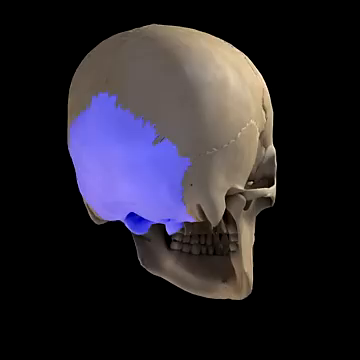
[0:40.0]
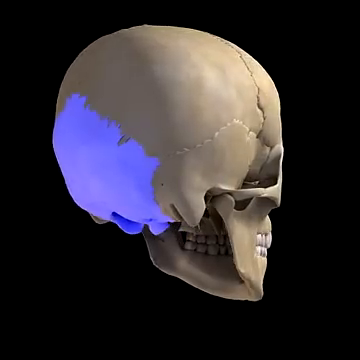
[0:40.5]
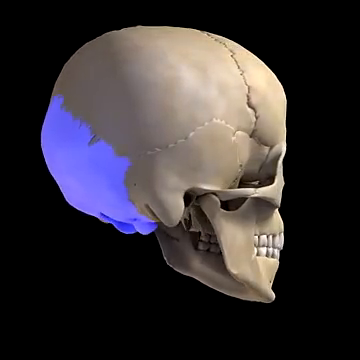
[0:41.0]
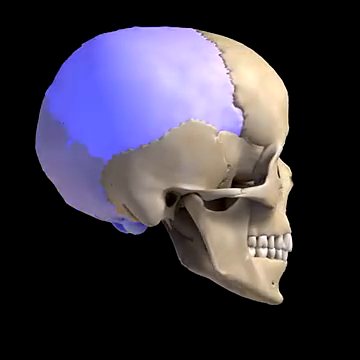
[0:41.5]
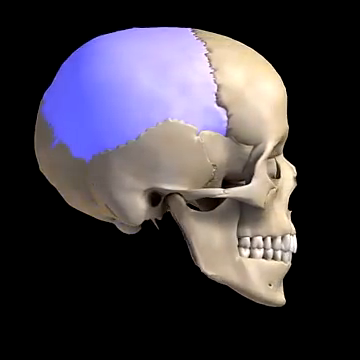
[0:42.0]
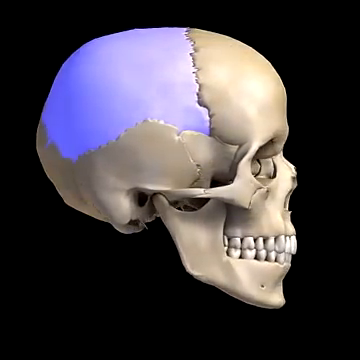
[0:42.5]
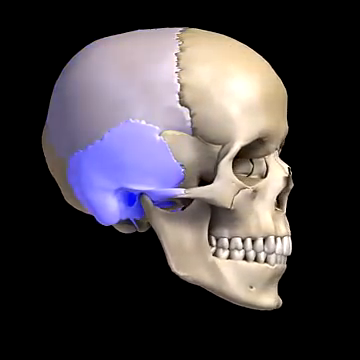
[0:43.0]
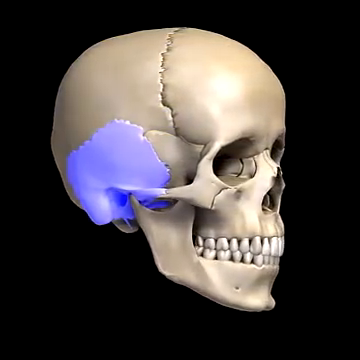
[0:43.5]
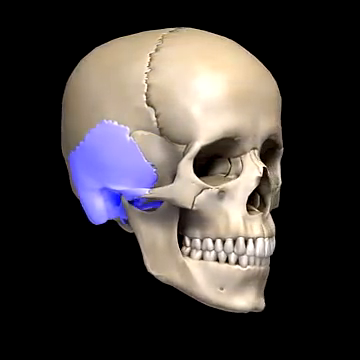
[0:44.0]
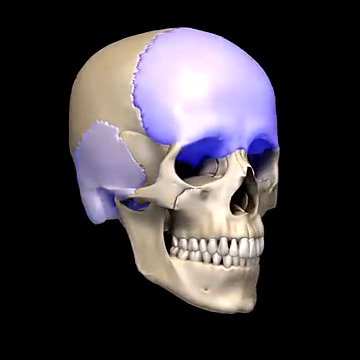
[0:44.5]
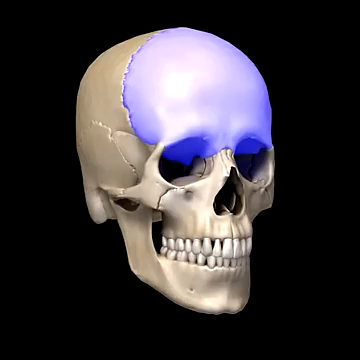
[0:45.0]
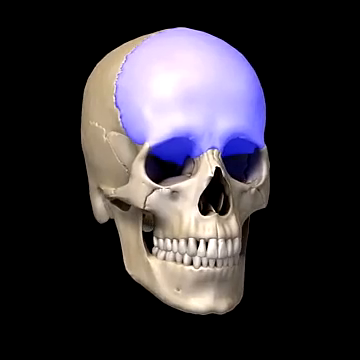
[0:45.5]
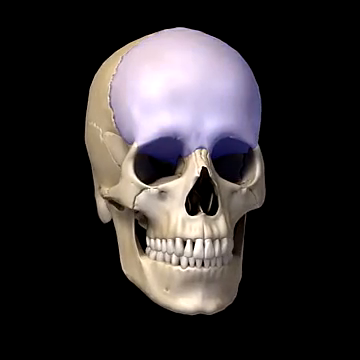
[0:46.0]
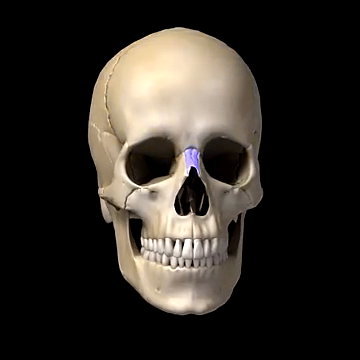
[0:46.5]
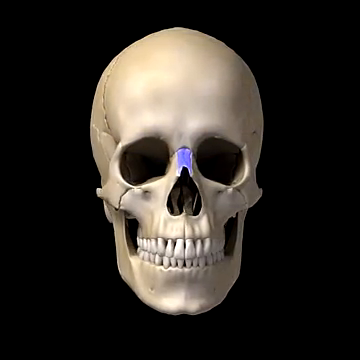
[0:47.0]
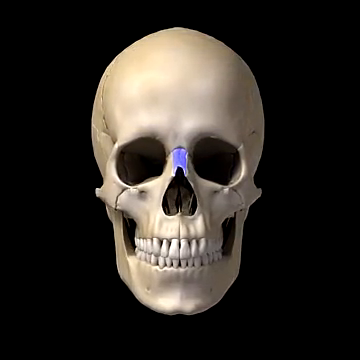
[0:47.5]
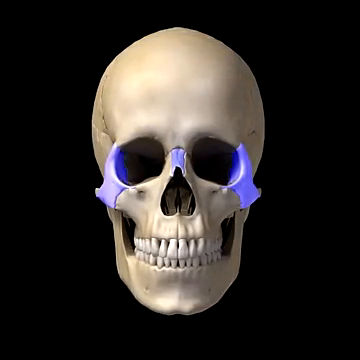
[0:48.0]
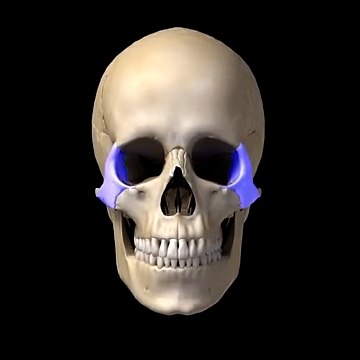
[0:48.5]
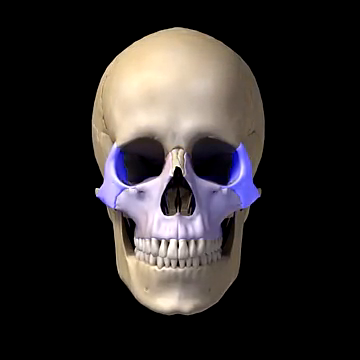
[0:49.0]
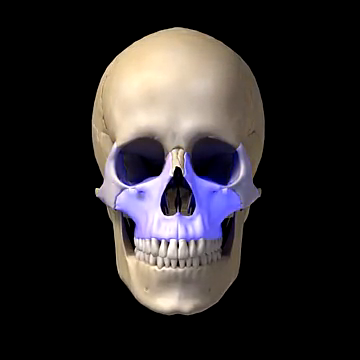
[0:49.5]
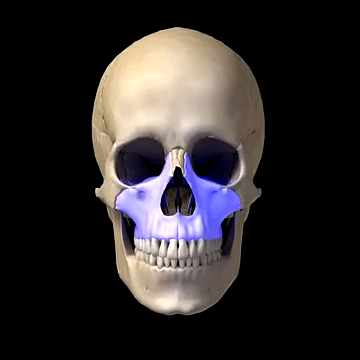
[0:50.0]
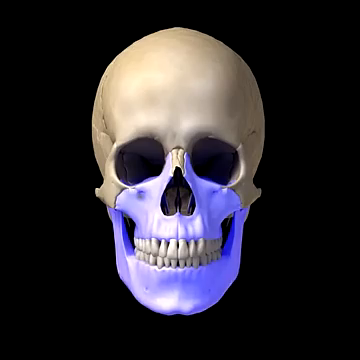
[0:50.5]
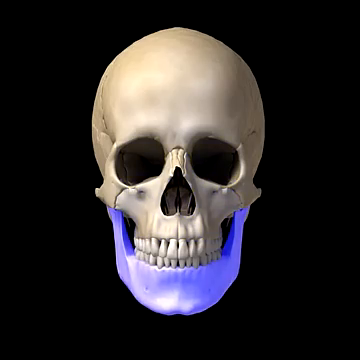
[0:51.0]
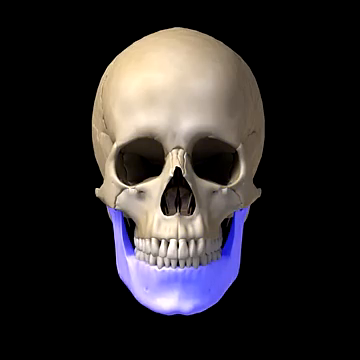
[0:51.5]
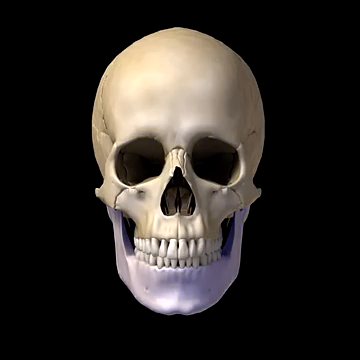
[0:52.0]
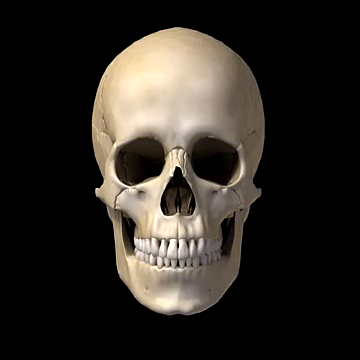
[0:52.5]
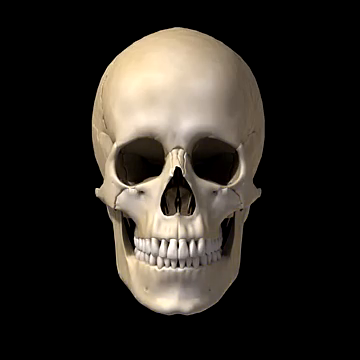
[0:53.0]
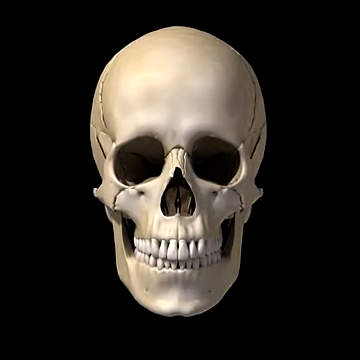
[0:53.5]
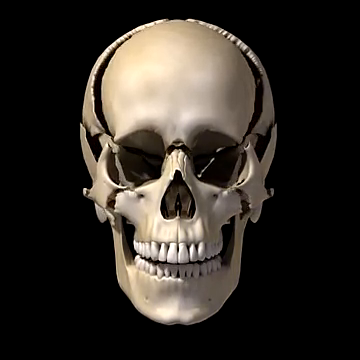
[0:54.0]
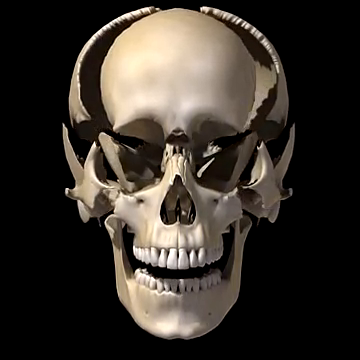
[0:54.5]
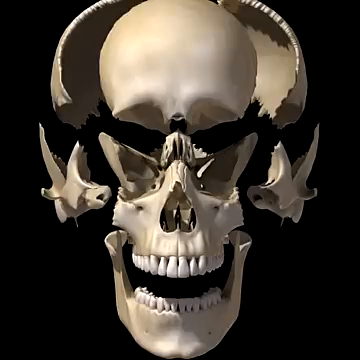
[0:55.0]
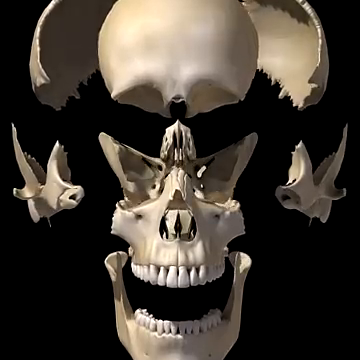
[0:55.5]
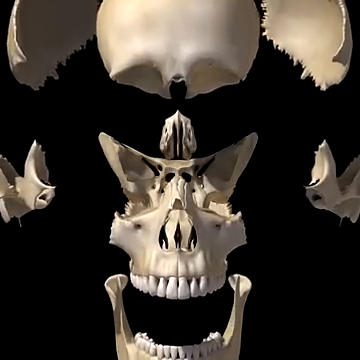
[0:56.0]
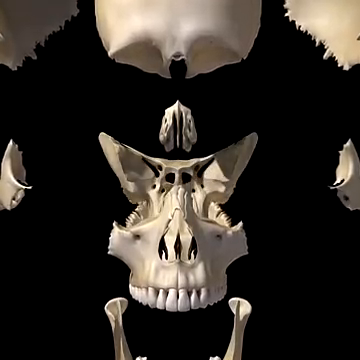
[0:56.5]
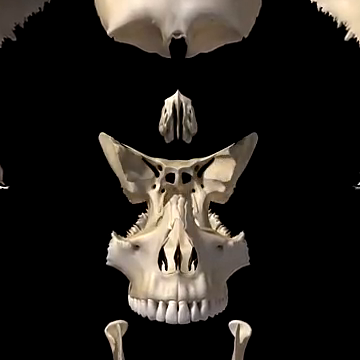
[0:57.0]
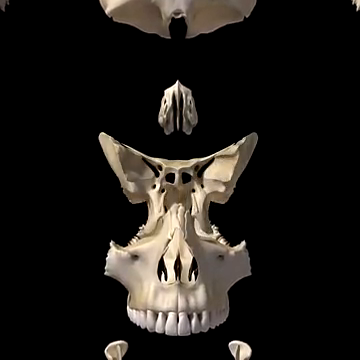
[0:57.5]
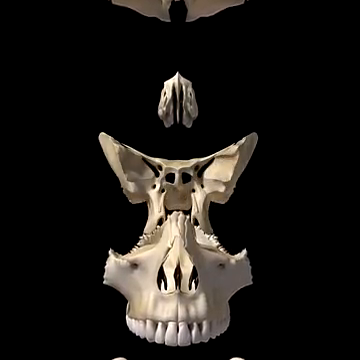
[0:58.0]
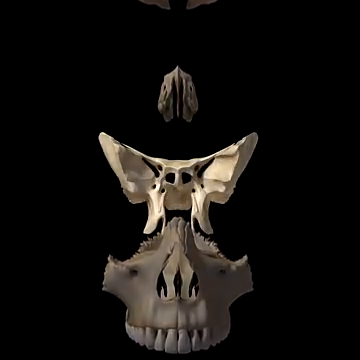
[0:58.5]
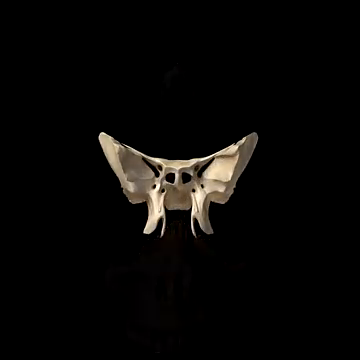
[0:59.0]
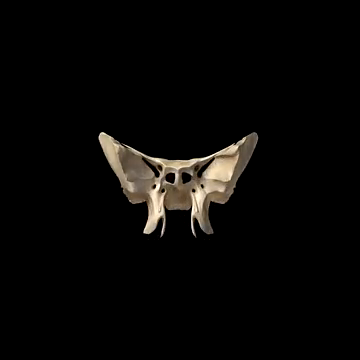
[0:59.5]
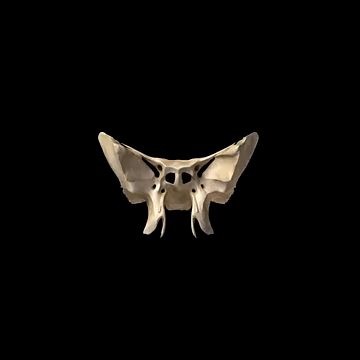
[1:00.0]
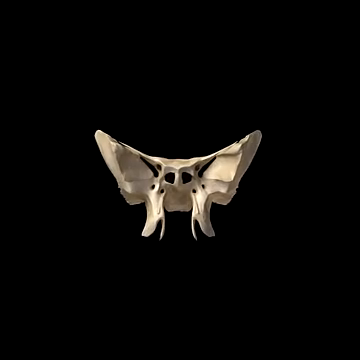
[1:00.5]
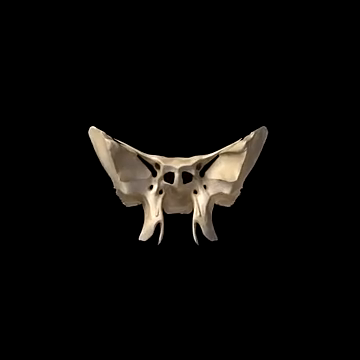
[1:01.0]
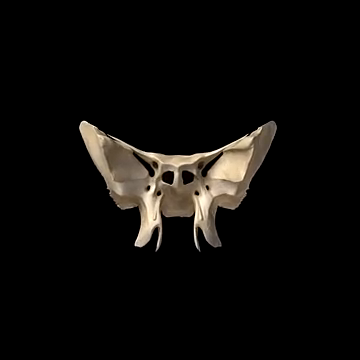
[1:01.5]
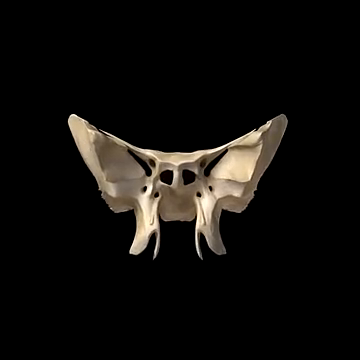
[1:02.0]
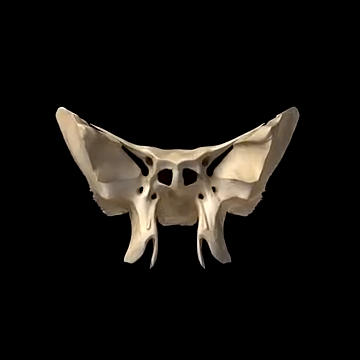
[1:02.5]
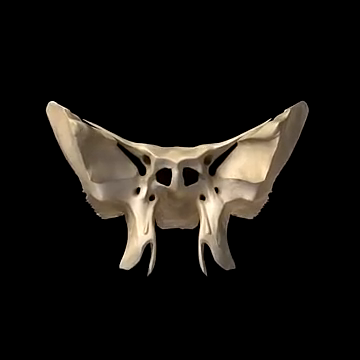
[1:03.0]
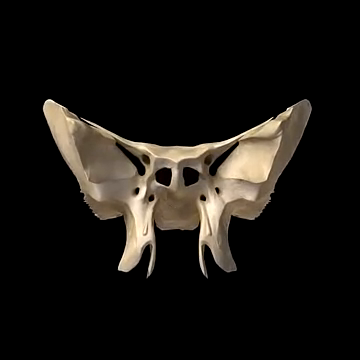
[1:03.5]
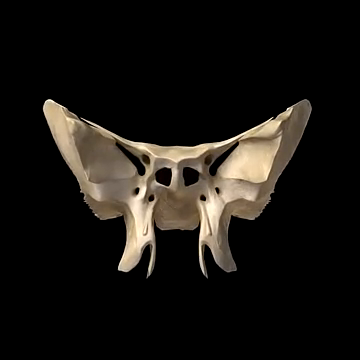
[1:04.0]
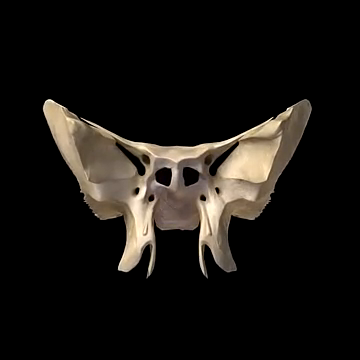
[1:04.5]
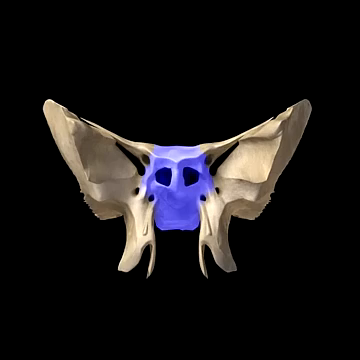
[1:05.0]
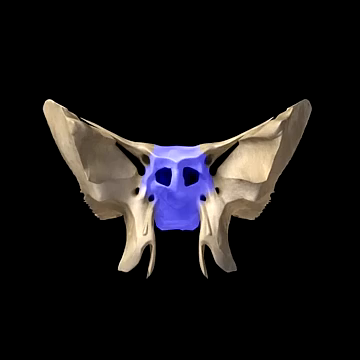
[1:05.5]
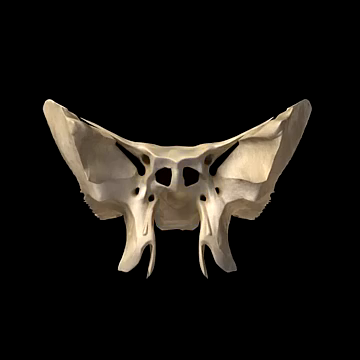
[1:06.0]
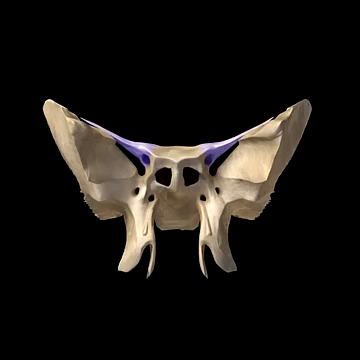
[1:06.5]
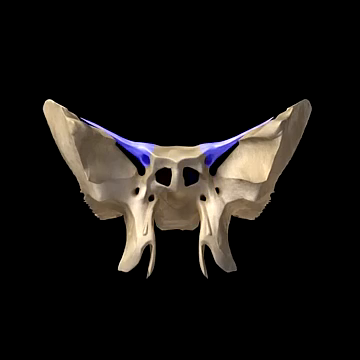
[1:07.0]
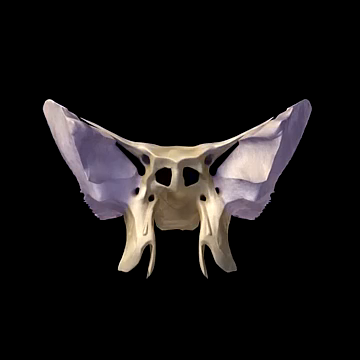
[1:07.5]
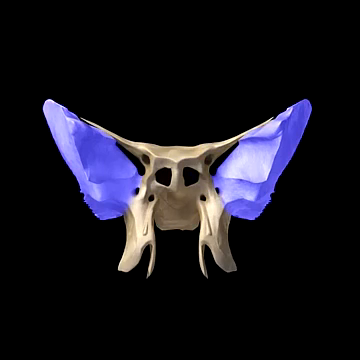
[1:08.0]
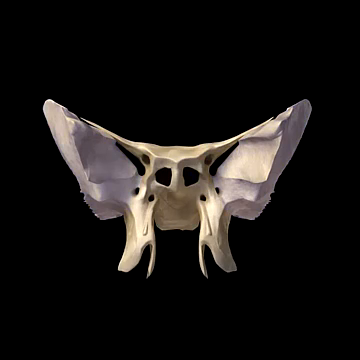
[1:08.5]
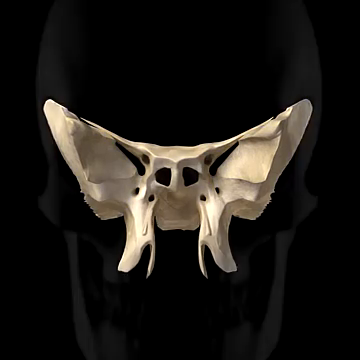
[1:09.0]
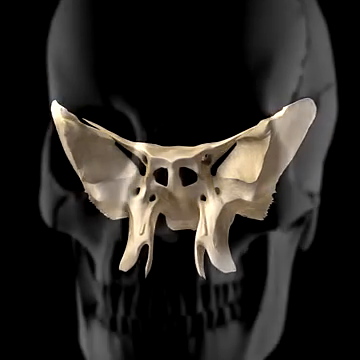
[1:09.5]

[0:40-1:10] On a black background, the skull is facing backwards to the right: a back view, turned toward the right but not completely a side view. It is rotating 360 degrees from the viewer's left to the right. The very back of the skull is highlighted in purple, as if to show which part of the skull it is. The skull quickly continues to rotate, and the middle of the top of the skull is highlighted in purple as it reaches a side view. It rotates further to the right and the bottom right part of the skull turns purple; as it rotates to the front, the front lobe turns purple, and as the skull becomes centered facing the viewer, the nose turns light purple. With the skull fully facing the viewer, the sides of the eye sockets have turned purple. After that, the jaw and upper jaw area, including the nose, turn purple.